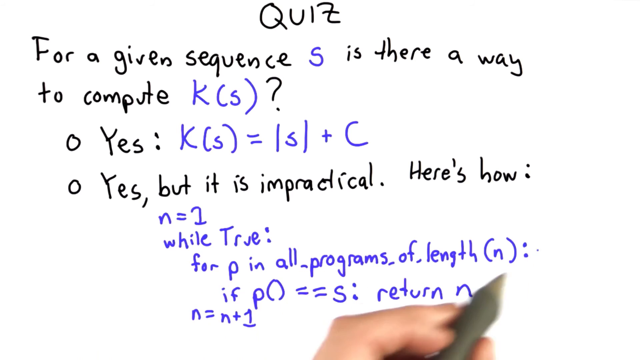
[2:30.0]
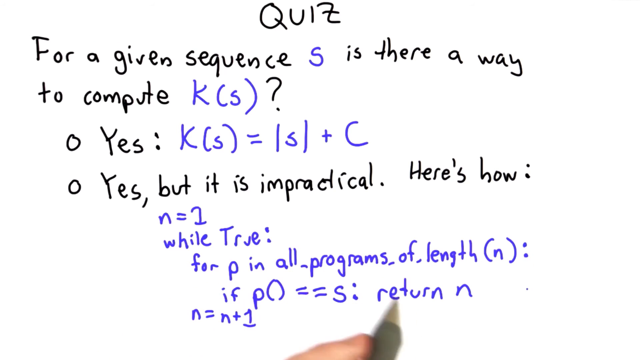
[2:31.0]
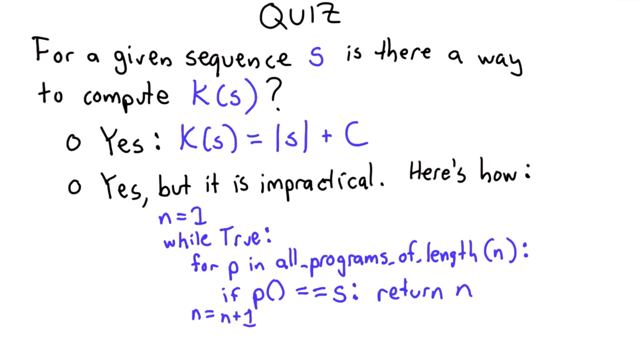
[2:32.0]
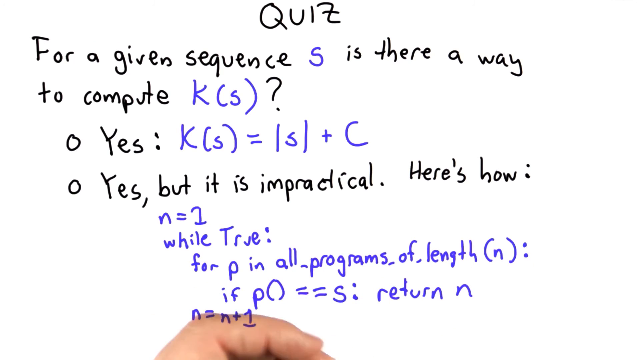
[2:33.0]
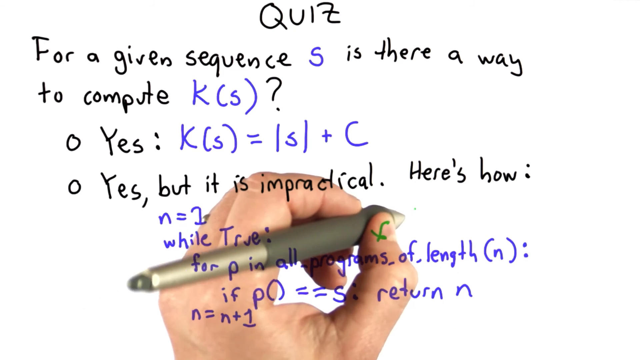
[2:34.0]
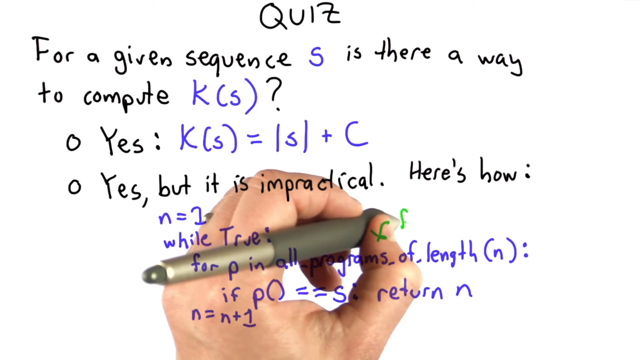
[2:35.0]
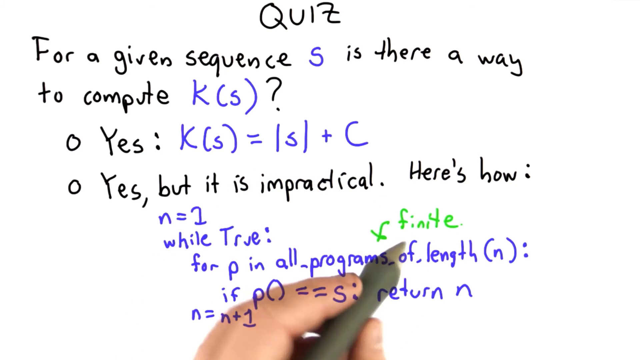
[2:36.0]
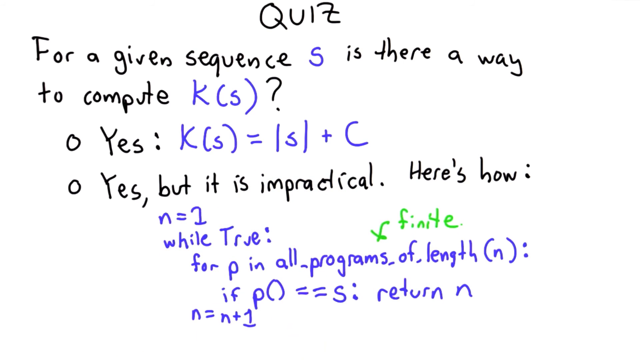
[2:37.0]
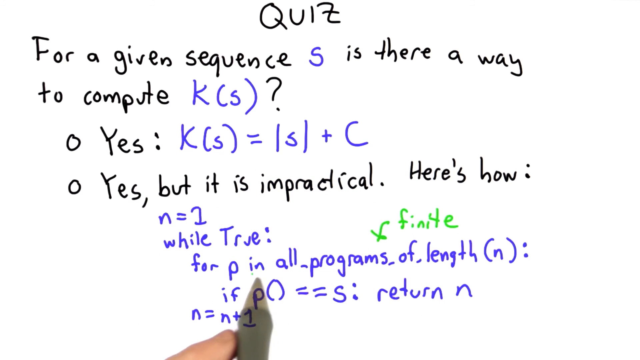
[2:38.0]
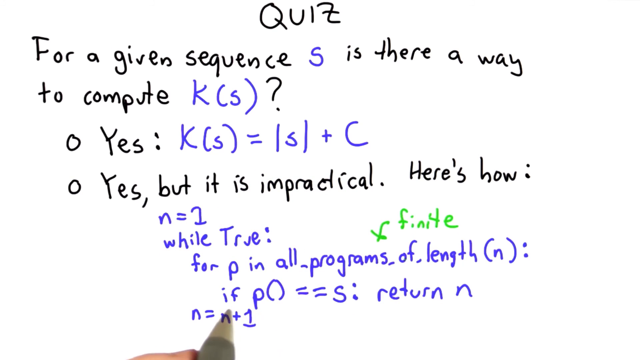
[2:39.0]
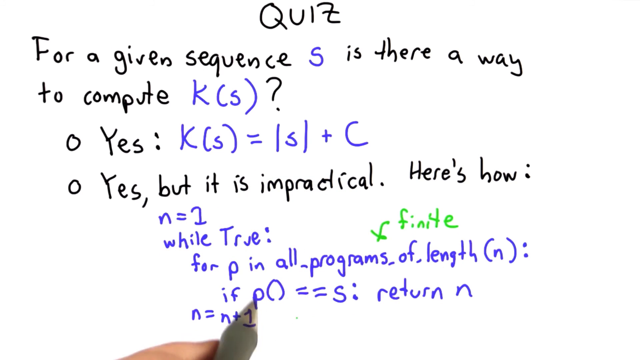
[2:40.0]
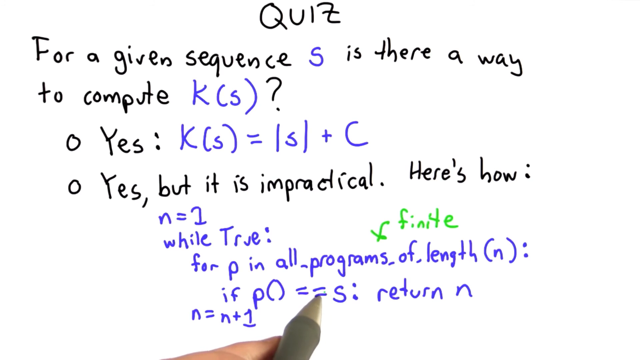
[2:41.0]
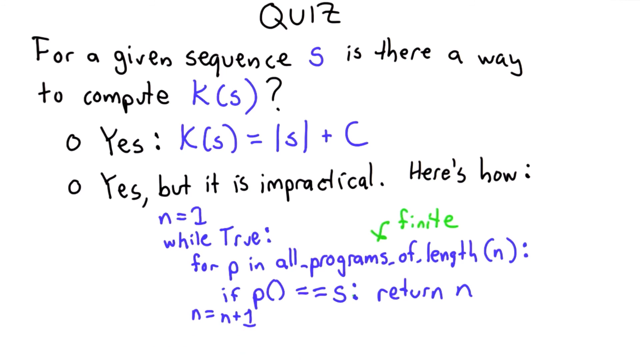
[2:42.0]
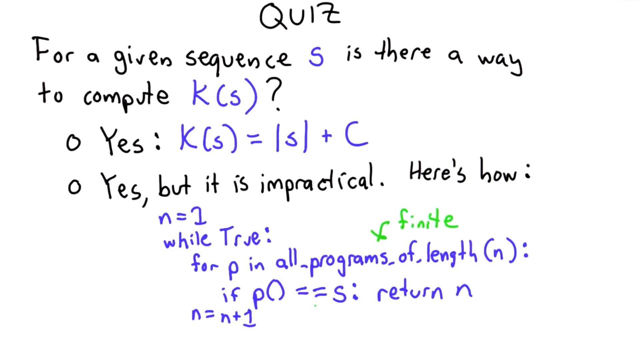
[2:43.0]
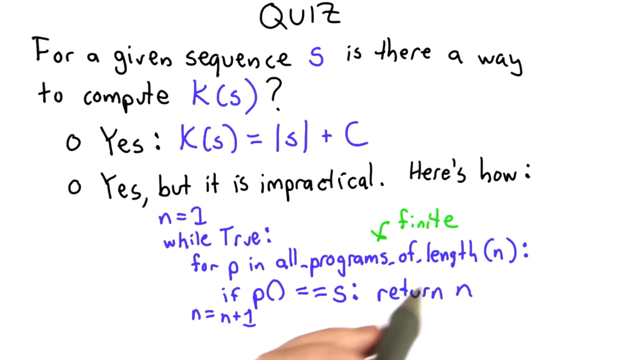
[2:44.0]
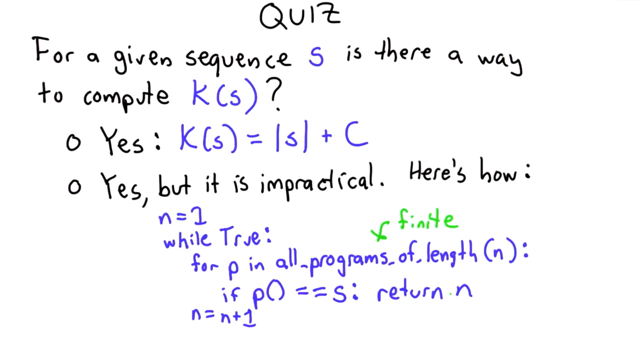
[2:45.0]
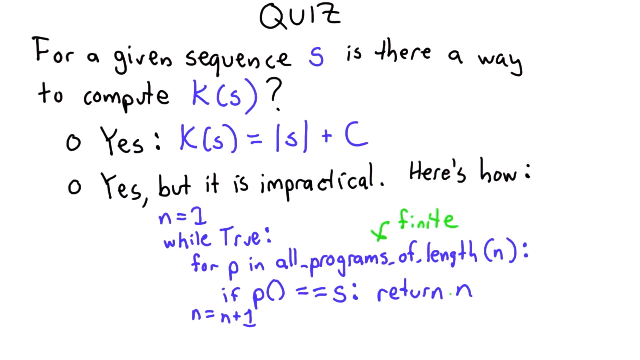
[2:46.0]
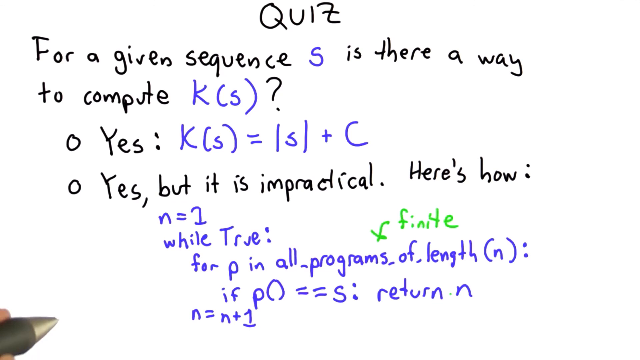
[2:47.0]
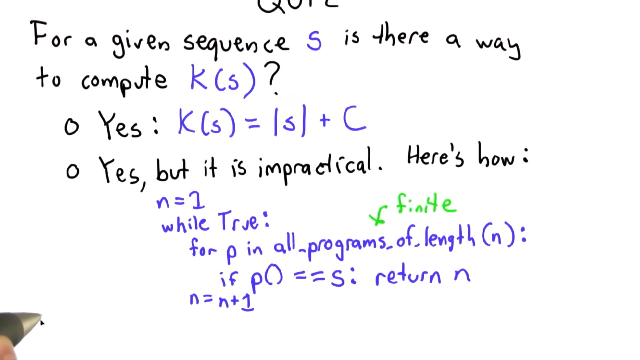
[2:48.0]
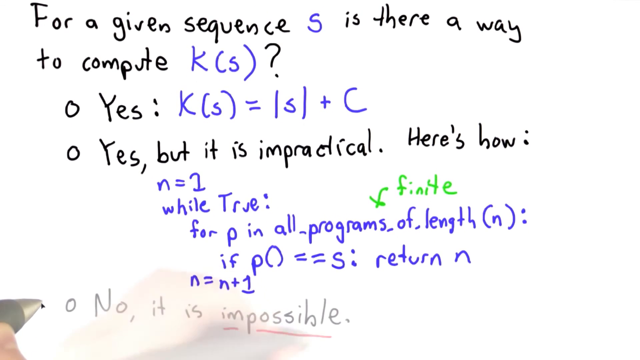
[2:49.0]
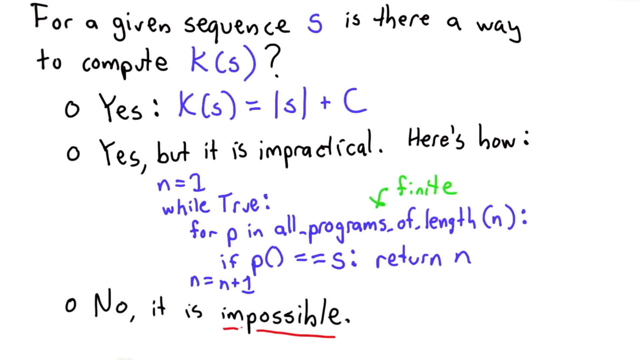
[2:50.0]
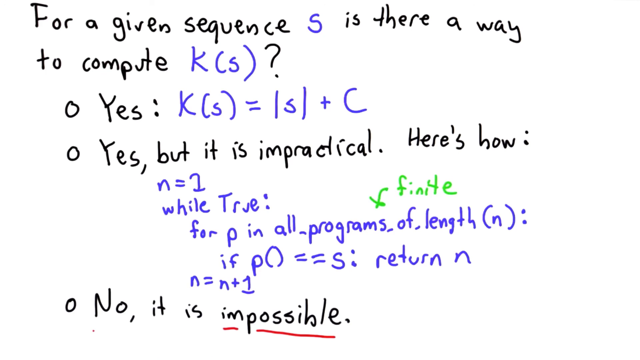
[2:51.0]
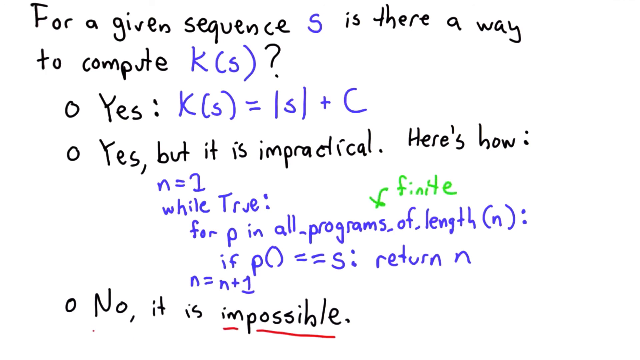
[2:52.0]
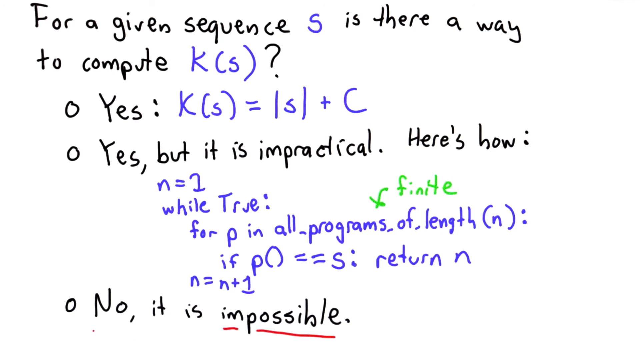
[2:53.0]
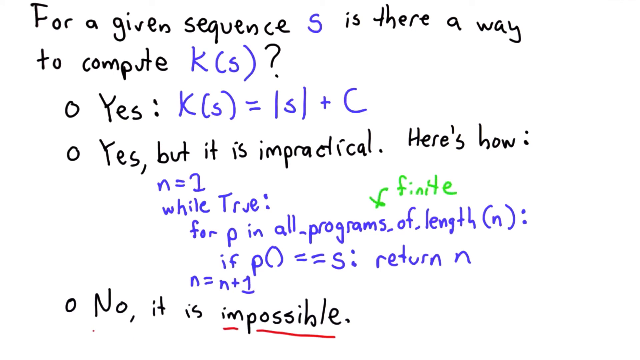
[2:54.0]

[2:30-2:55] The white screen shows the word "quiz" in black at the very top middle. Underneath it says "for a given sequence s is there a way to compute K(s)?", then "yes K(s) equals s plus C," then "yes but it is impractical. Here's how." Below, written in blue, are "n equals one," "while true," "for p in all programs of length (n)," "if p equals equals s return n," and "n equals n plus one." A left hand holding a gold-colored pen points out areas of the screen, with a dot moving along the screen wherever the pen goes. He writes "x finite" in green and points to it with the pen. Then, at the very bottom, he writes "no it is impossible" in black.